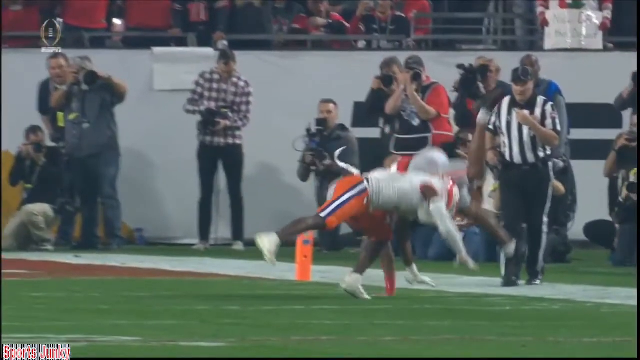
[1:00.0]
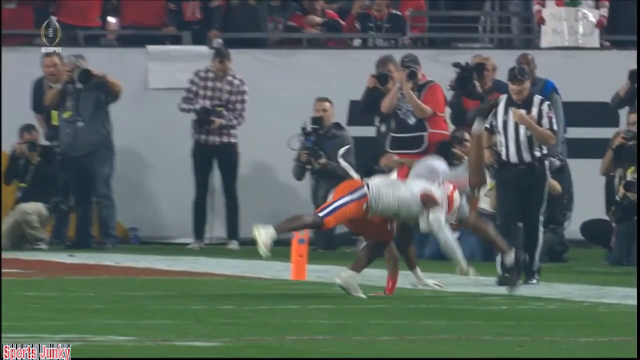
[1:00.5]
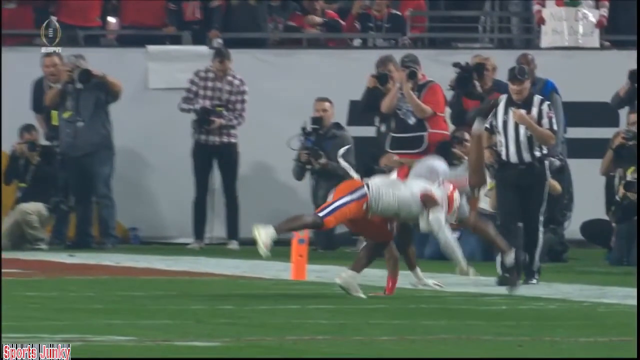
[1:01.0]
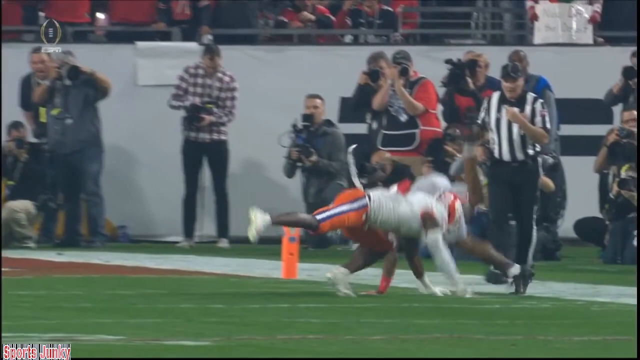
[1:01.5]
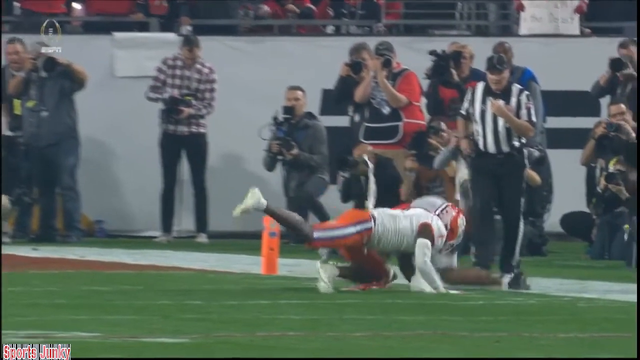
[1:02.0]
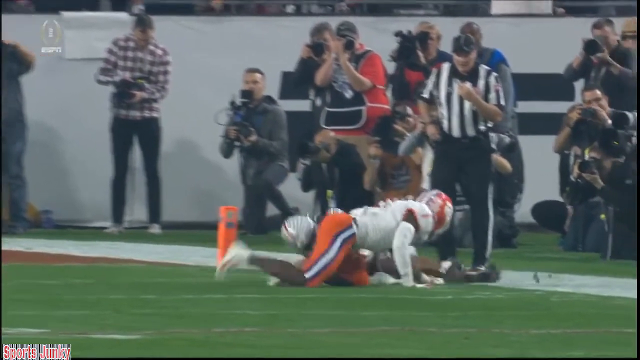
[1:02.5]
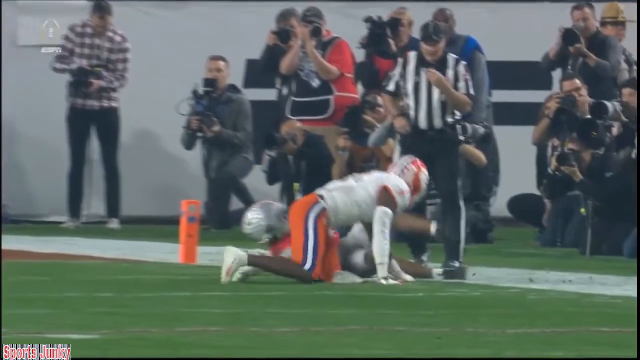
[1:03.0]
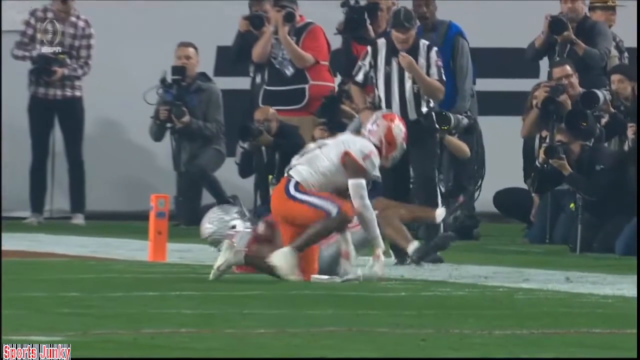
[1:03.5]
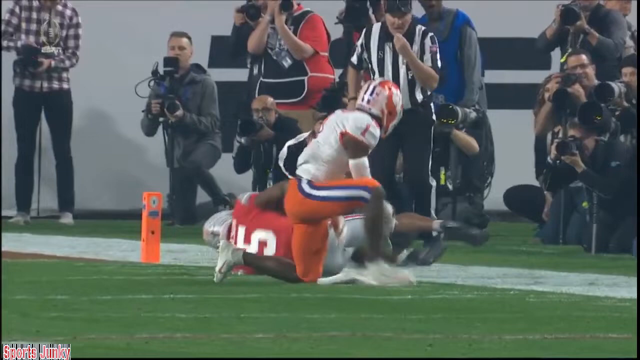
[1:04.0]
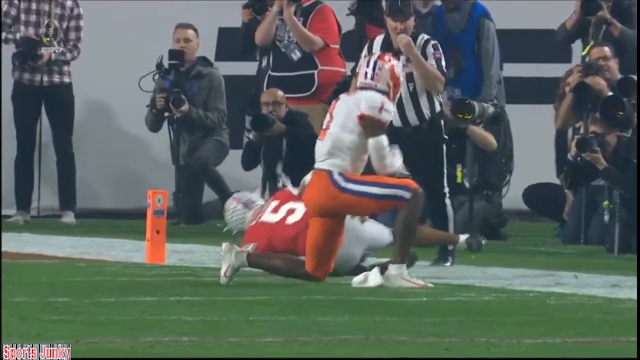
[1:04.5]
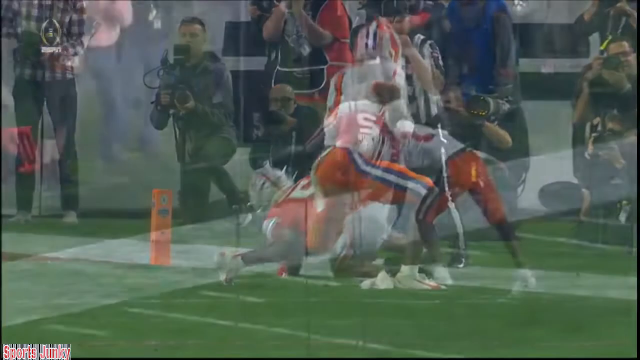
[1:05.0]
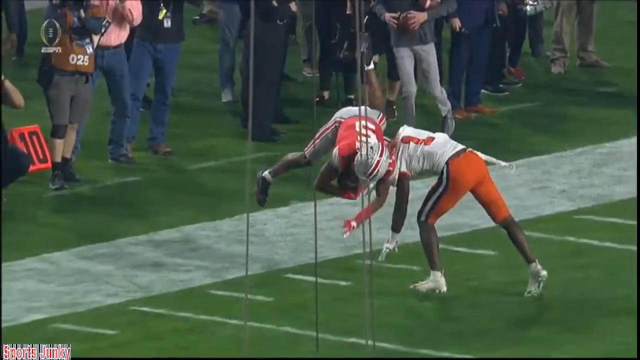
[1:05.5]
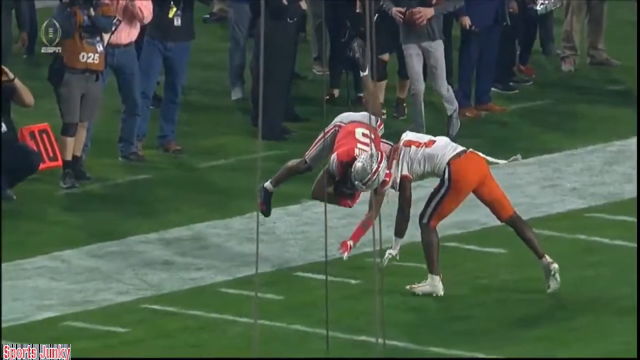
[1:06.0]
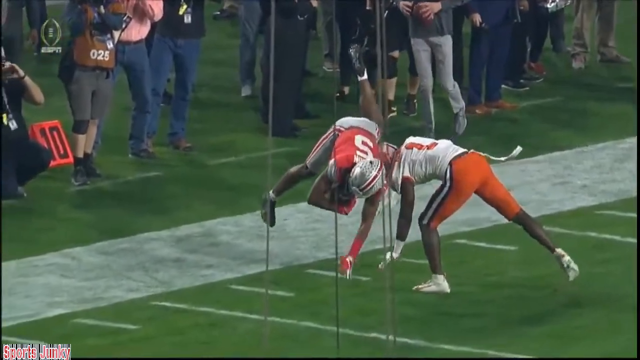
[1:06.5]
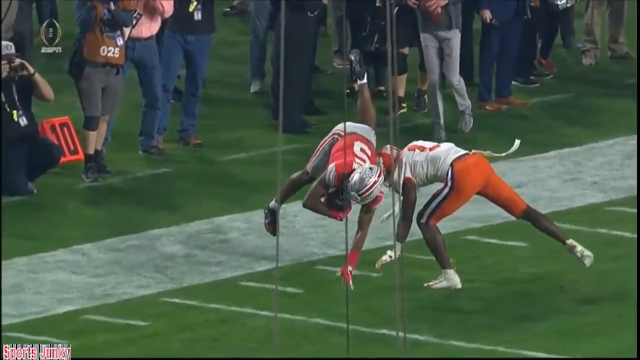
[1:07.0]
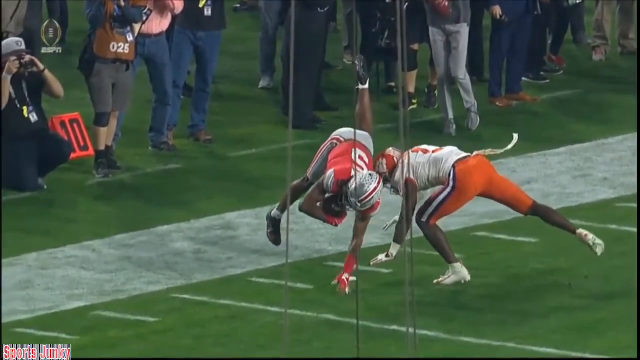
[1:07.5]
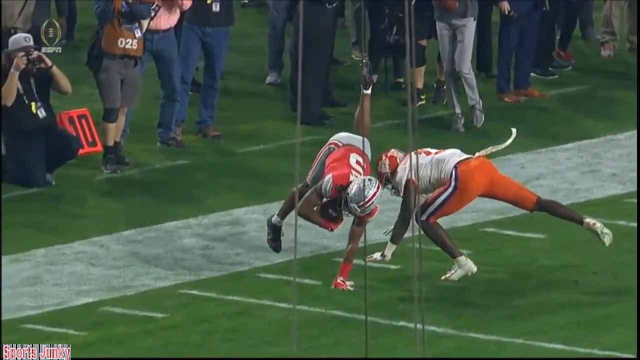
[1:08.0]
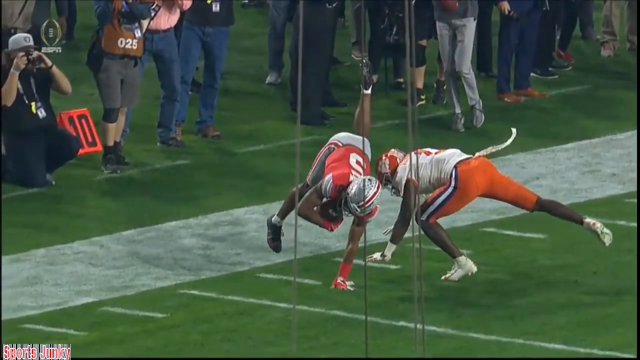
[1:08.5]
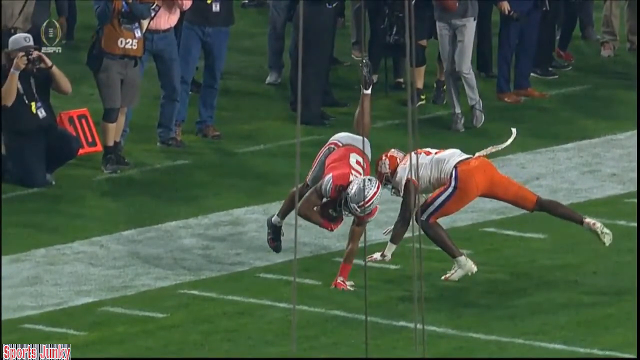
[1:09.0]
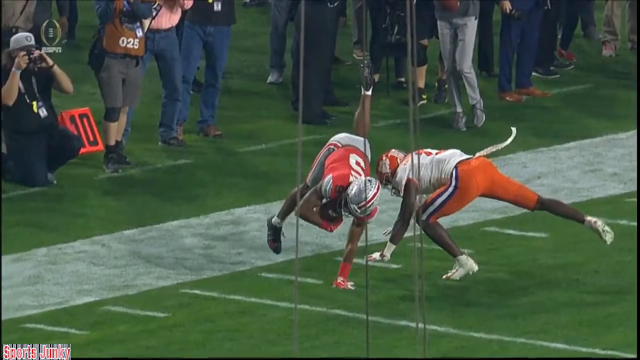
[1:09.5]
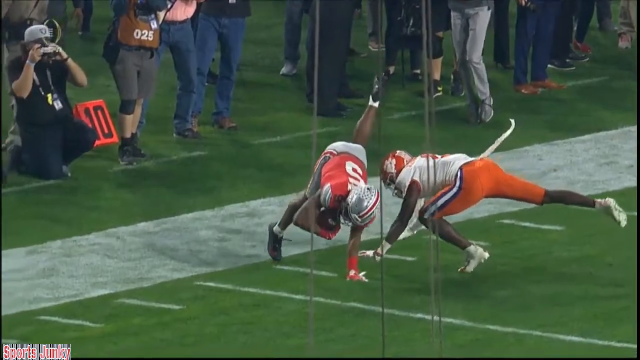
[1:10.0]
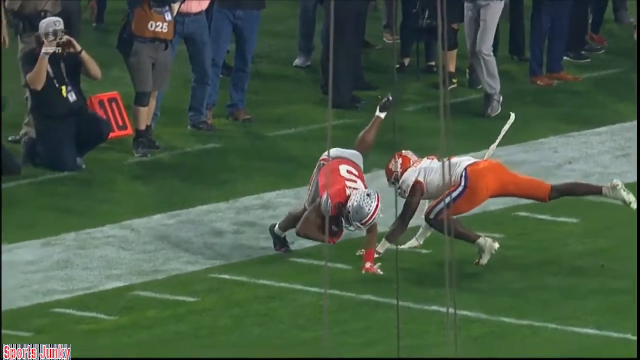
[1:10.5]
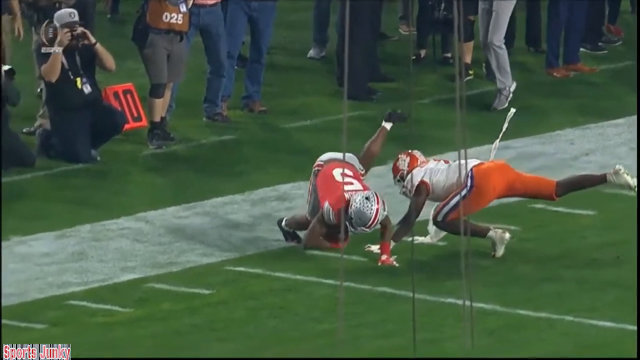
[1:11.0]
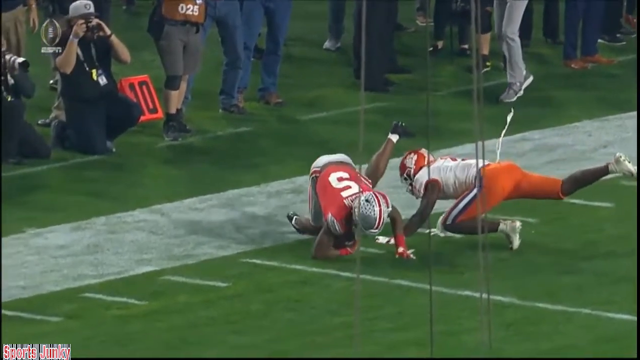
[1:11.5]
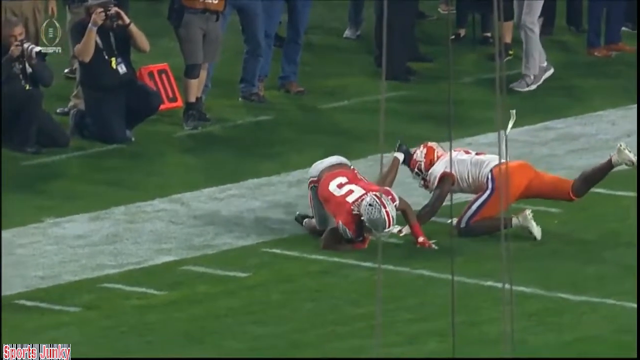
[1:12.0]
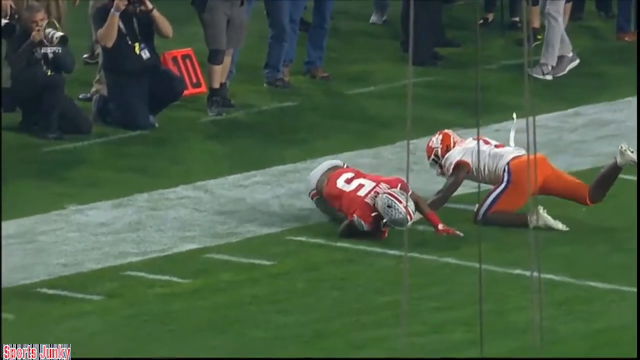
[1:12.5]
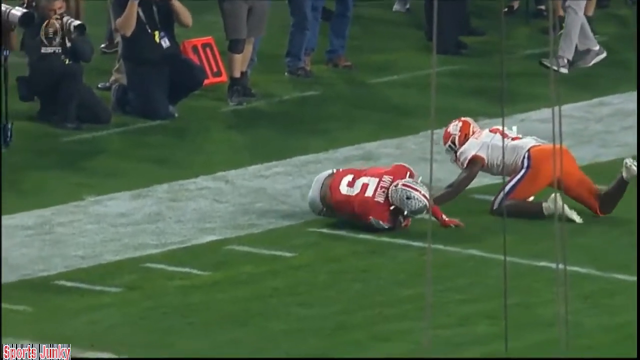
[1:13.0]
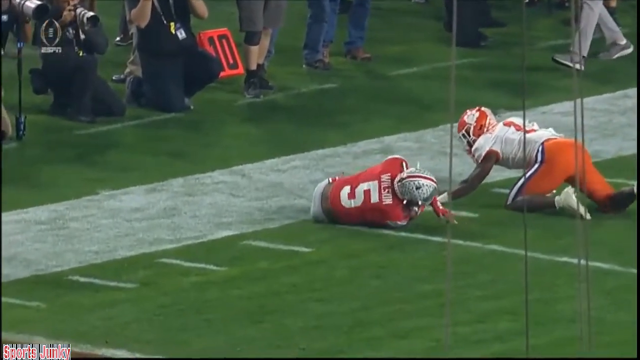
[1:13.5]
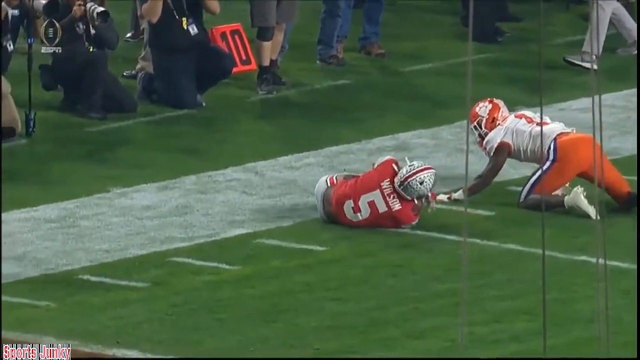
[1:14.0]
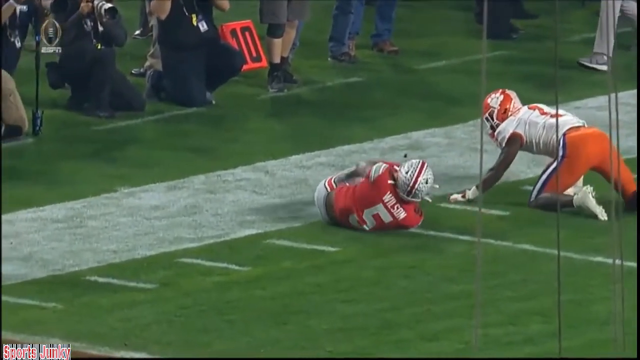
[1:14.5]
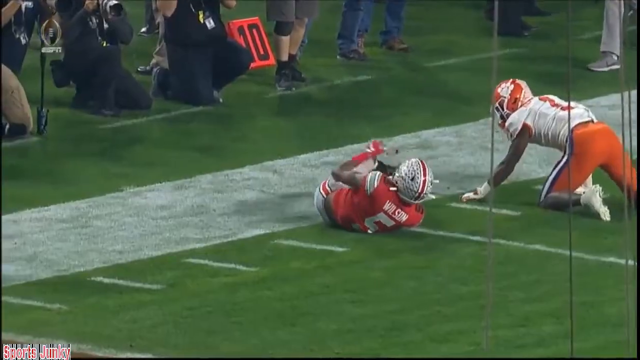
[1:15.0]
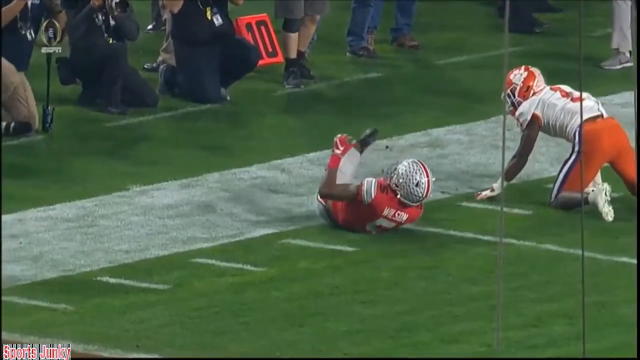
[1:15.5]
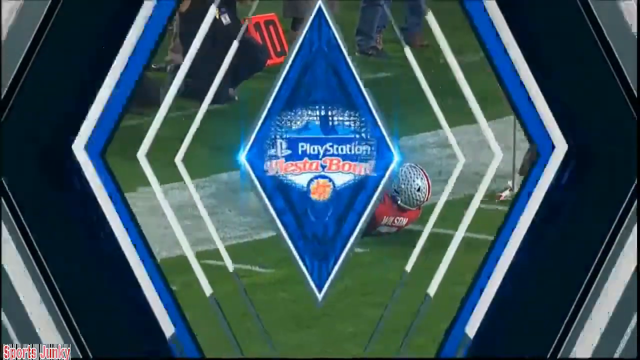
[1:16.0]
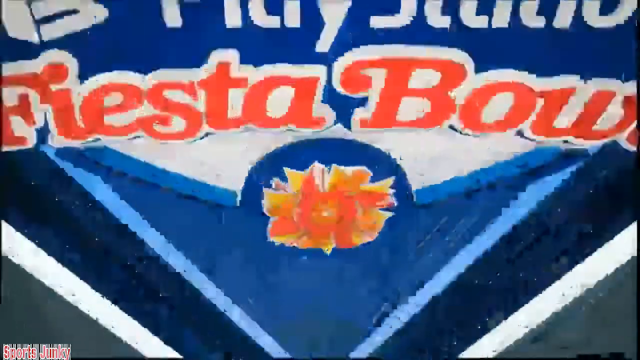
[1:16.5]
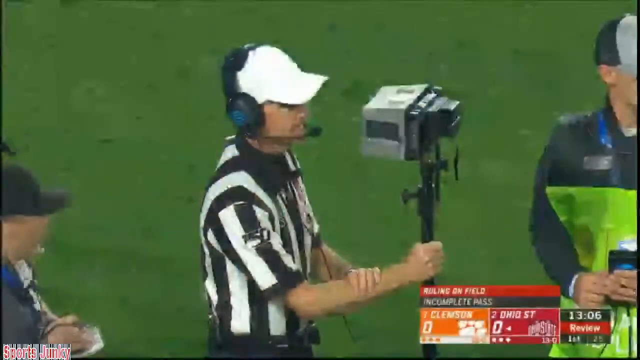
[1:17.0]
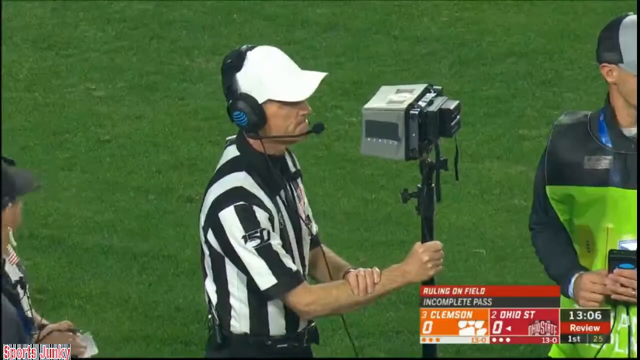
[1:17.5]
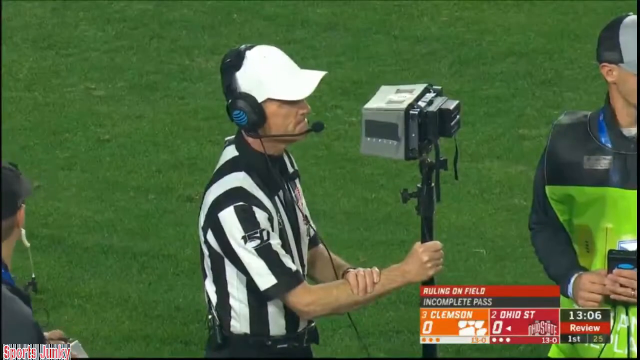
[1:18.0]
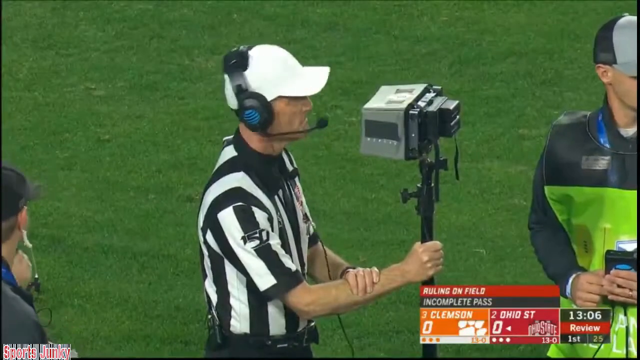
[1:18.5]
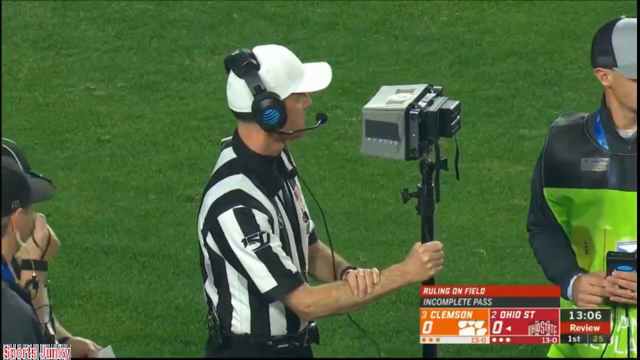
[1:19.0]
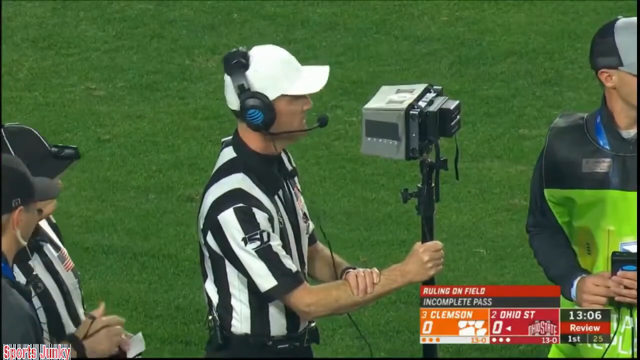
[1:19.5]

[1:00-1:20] In the ESPN college football playoff game, the PlayStation Fiesta Bowl, between the Clemson Tigers and the Ohio State Buckeyes, the football is deep in Clemson territory. After a big play in which the number five receiver for Ohio State jumped way in the air and came down, the play is being reviewed to see whether he came down inbounds or out of bounds. It is shown from a different angle from the ref cam, indicated by a yellow watermark in the upper right-hand corner with "ref cam" in black and a black referee cap above it.